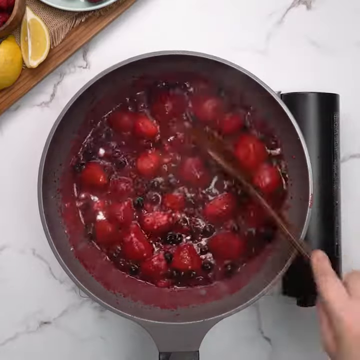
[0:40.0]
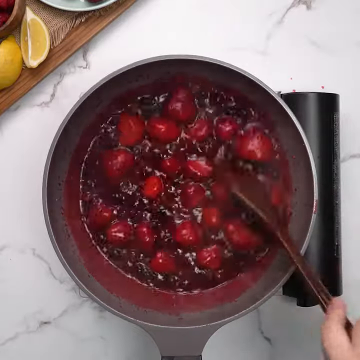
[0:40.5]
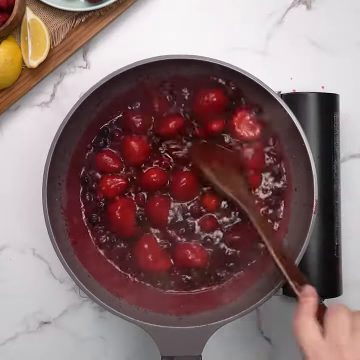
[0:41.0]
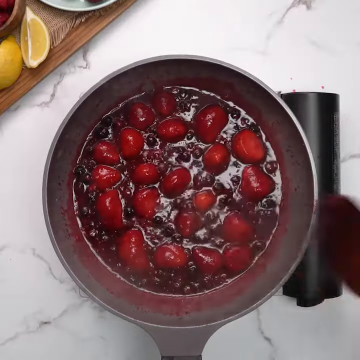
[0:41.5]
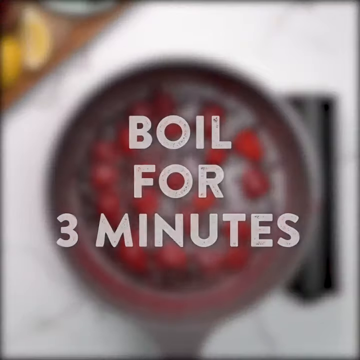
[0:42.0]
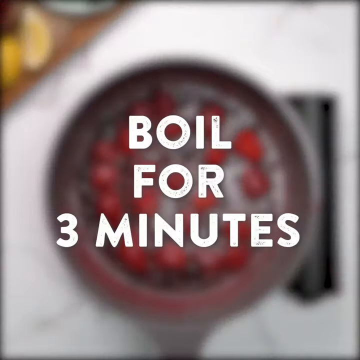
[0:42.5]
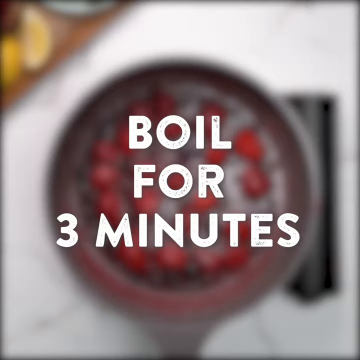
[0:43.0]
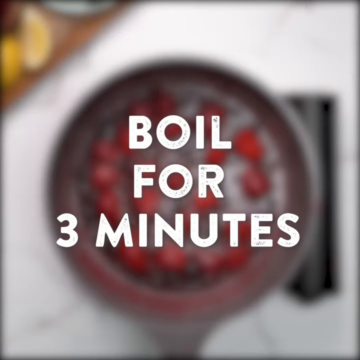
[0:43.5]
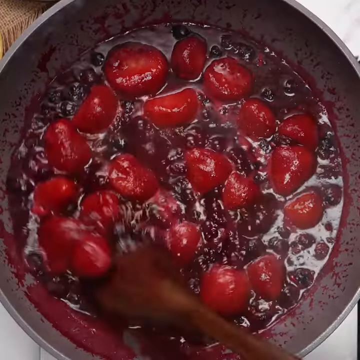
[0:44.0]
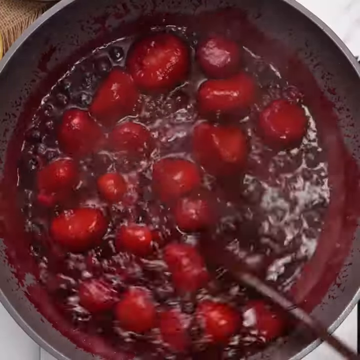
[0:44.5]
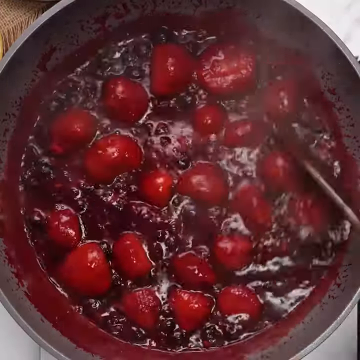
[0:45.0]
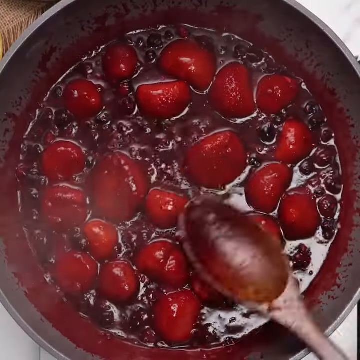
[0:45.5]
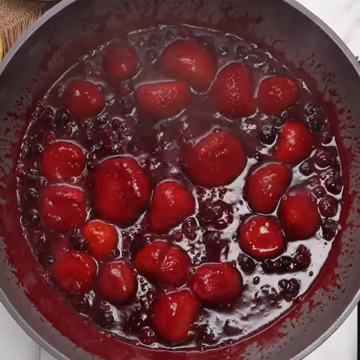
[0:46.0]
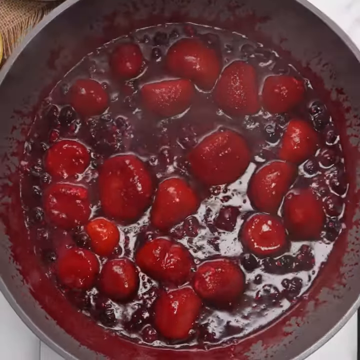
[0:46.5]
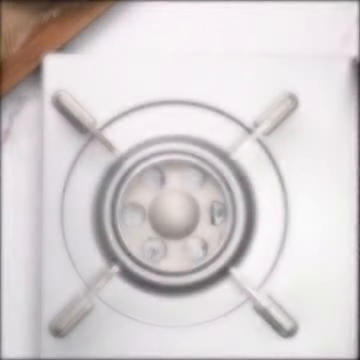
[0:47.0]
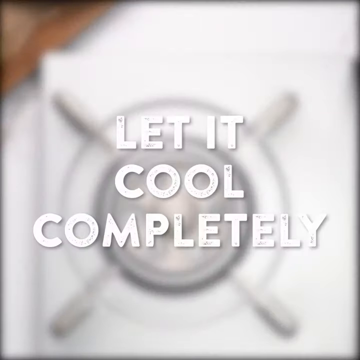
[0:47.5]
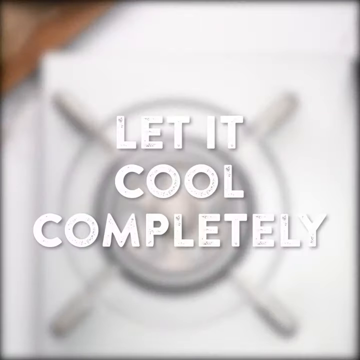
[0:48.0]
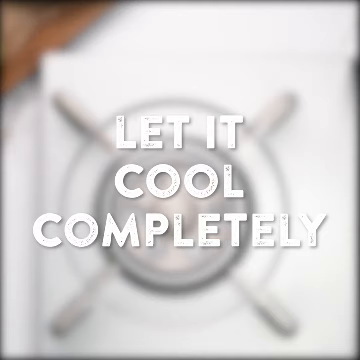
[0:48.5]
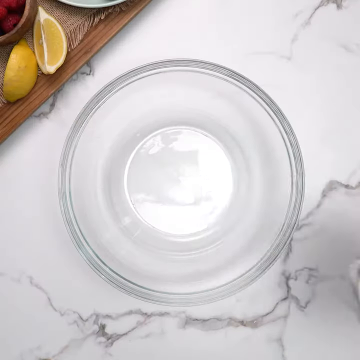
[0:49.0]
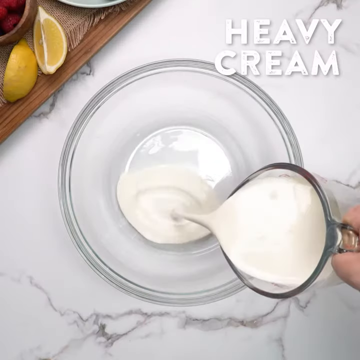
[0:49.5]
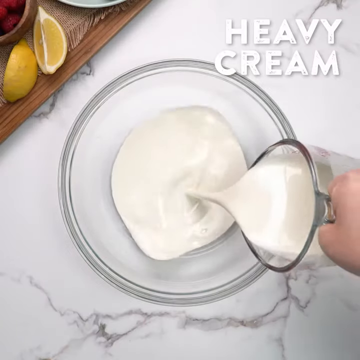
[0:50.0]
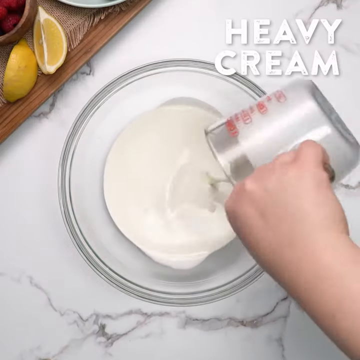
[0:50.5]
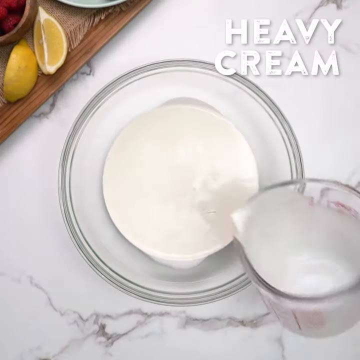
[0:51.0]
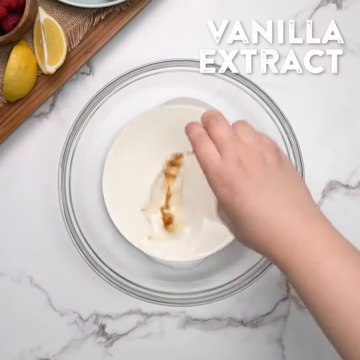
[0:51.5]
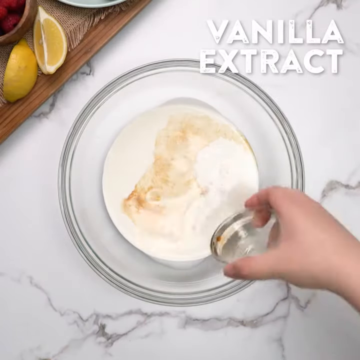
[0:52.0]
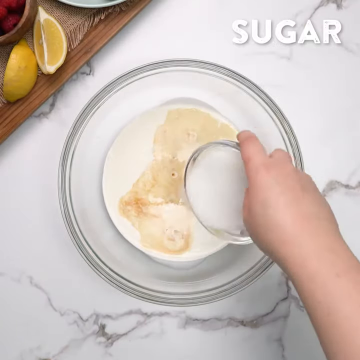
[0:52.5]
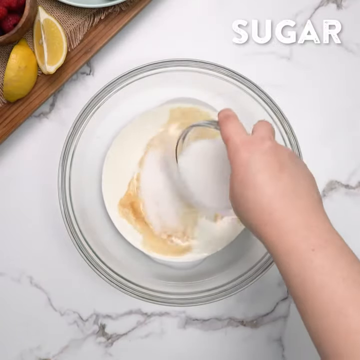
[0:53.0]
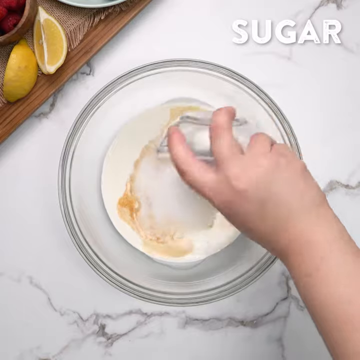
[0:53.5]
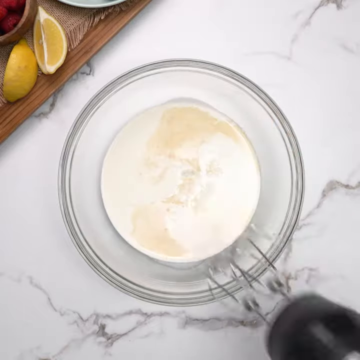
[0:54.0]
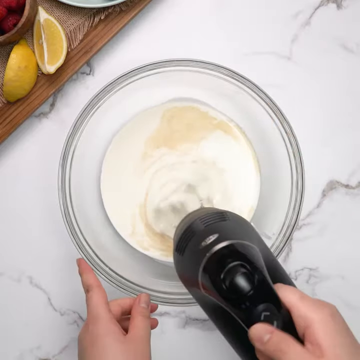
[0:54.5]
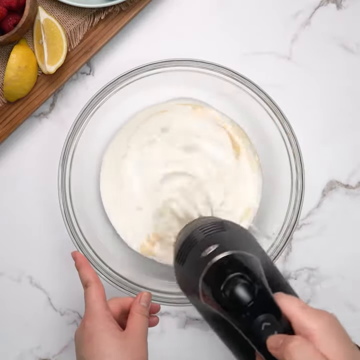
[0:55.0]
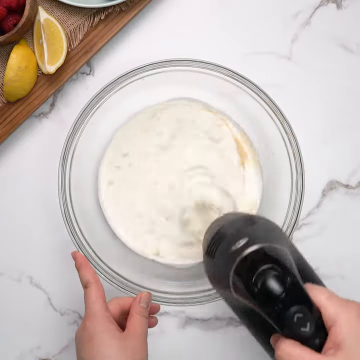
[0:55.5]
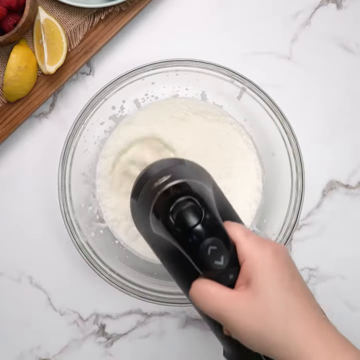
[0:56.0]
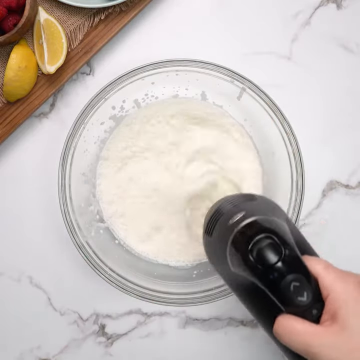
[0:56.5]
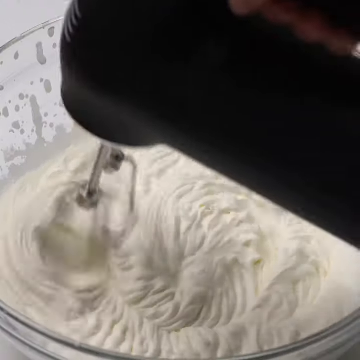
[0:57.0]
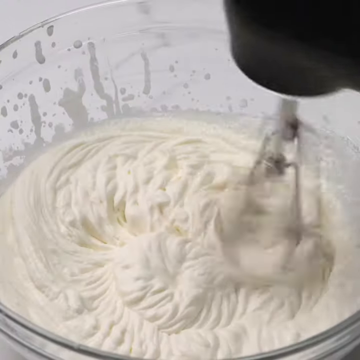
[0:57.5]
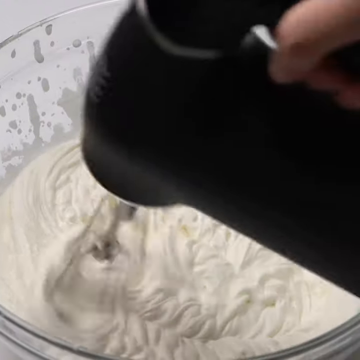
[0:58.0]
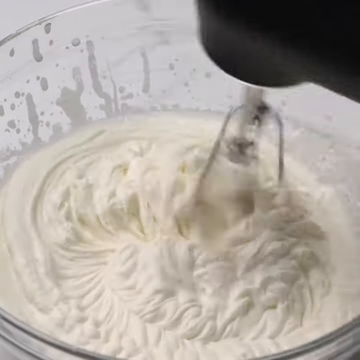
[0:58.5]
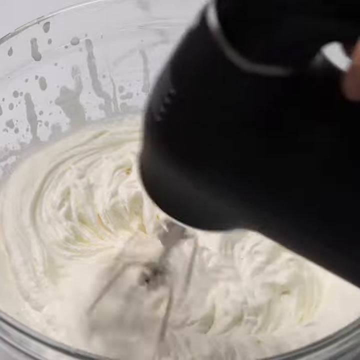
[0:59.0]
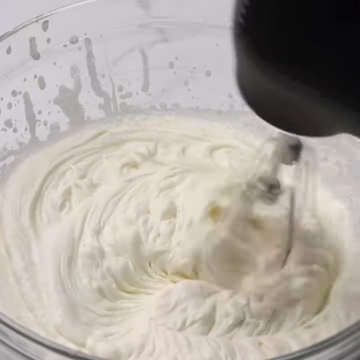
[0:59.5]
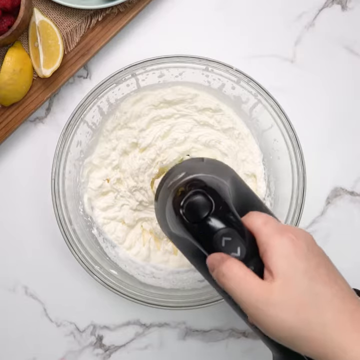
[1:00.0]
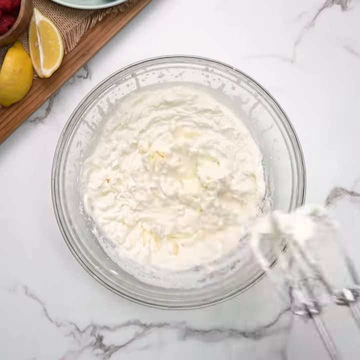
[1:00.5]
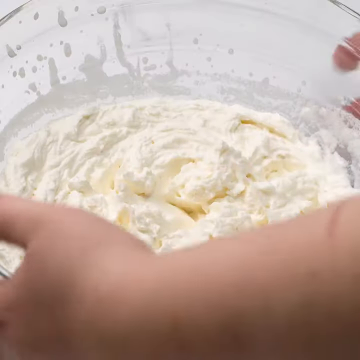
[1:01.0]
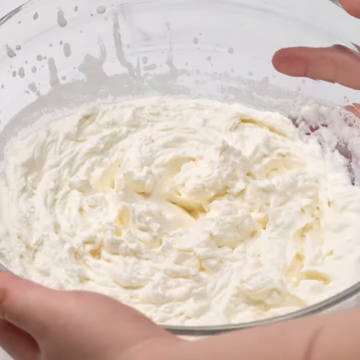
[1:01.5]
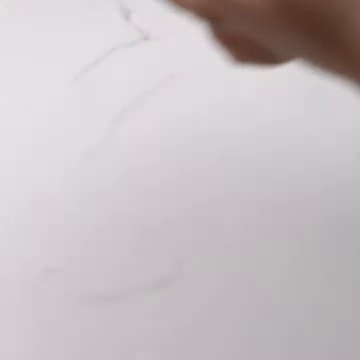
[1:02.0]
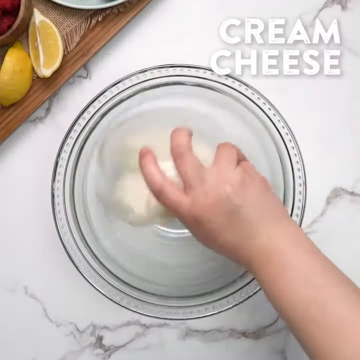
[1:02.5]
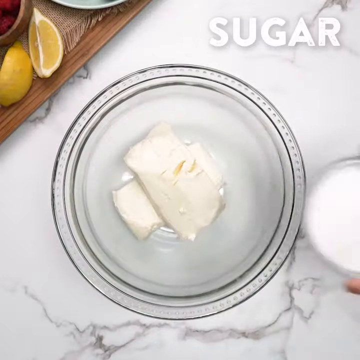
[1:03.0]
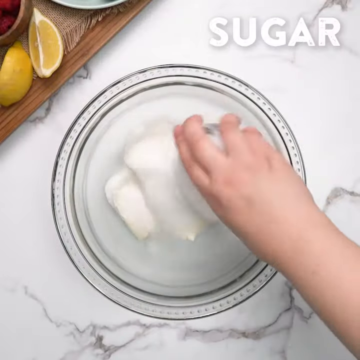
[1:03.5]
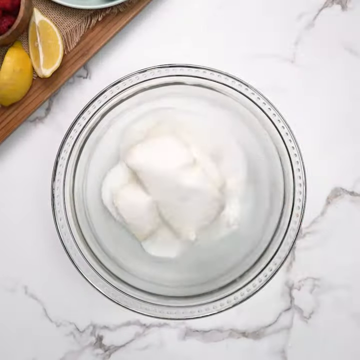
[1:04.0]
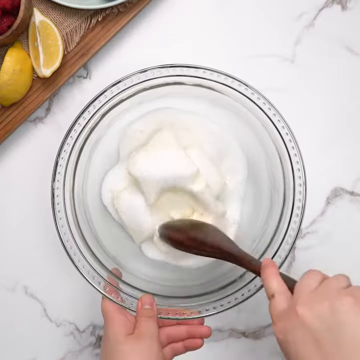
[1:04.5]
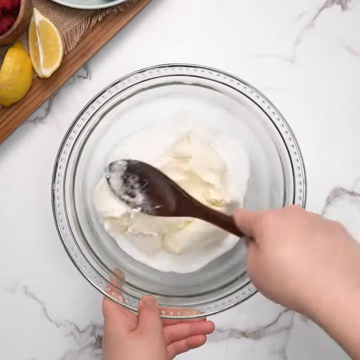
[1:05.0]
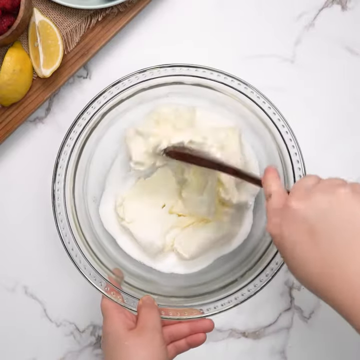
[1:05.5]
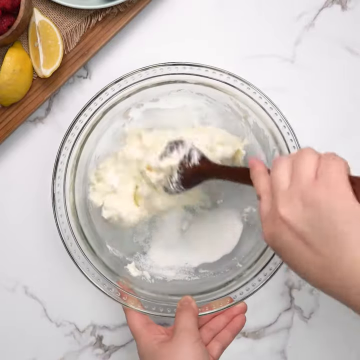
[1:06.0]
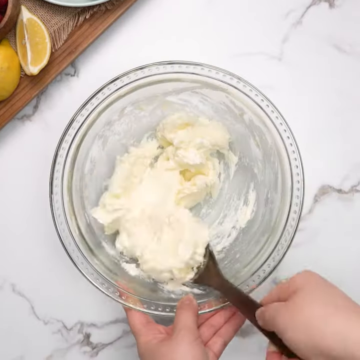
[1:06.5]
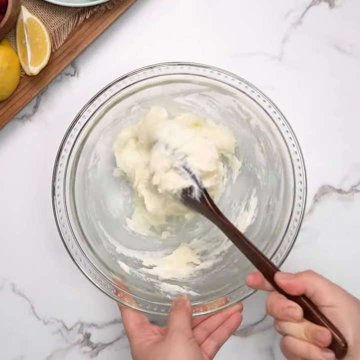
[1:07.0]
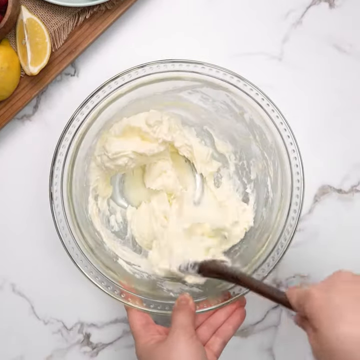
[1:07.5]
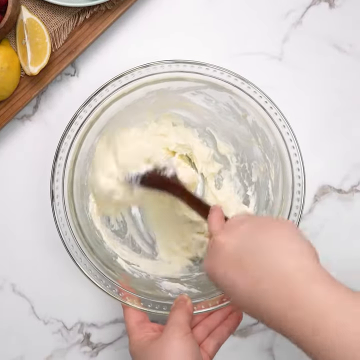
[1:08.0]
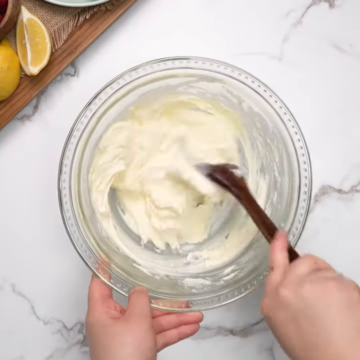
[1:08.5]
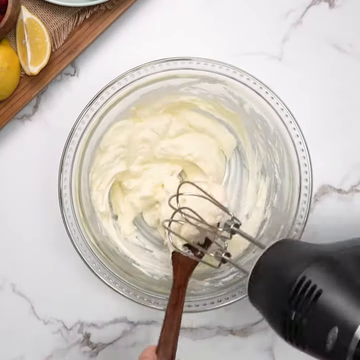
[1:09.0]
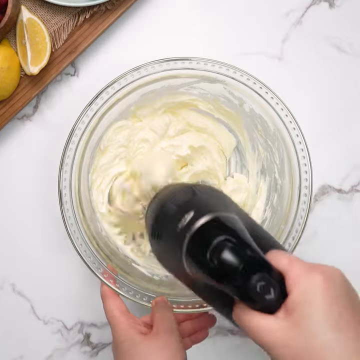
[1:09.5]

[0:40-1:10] A pan rests on a white marble countertop, with a barely visible tray in the upper left-hand corner holding two sliced lemons. In the middle of the screen, the pan contains a mixture of strawberries, blueberries, raspberries, and lemon juice, which a person mixes with a brown spatula into a soupy-like mixture. After a couple of seconds the image becomes fuzzy and white, all-capital text in the middle of the screen says "boil for three minutes." The person keeps mixing, then removes the pan from the heat as the text says "let it cool completely." Next, heavy cream, vanilla extract, and sugar are added to a plain clear bowl and mixed with a black mixer until whipped into a thick substance. The person then mixes cream cheese and sugar in a separate clear bowl.